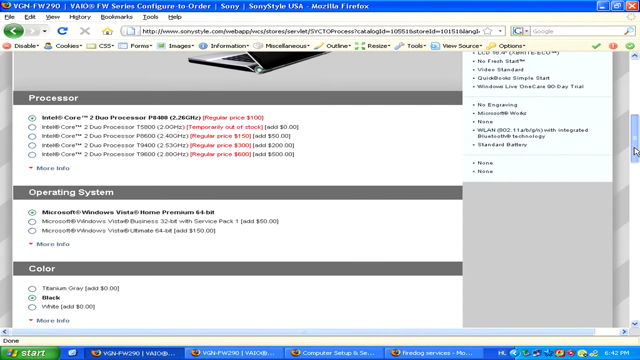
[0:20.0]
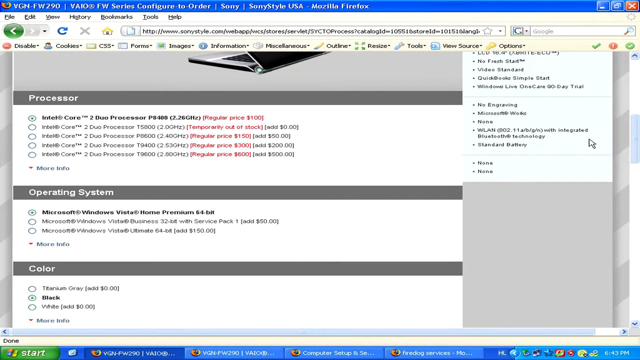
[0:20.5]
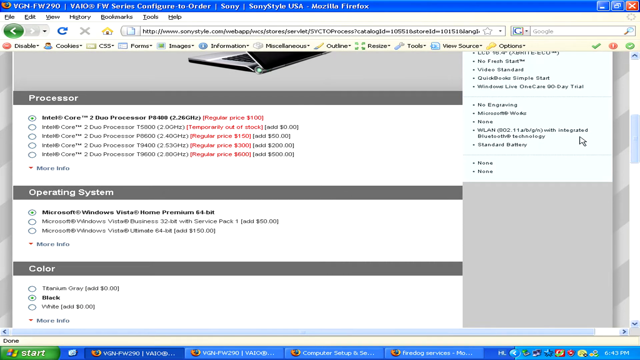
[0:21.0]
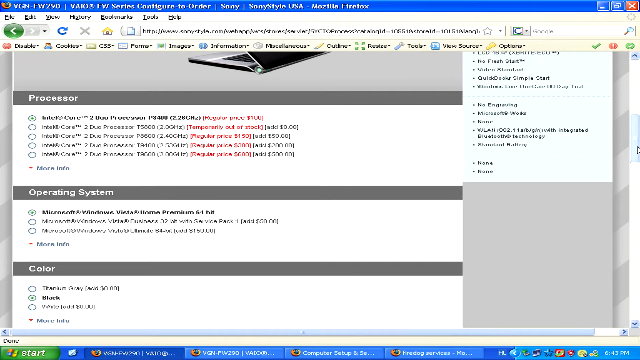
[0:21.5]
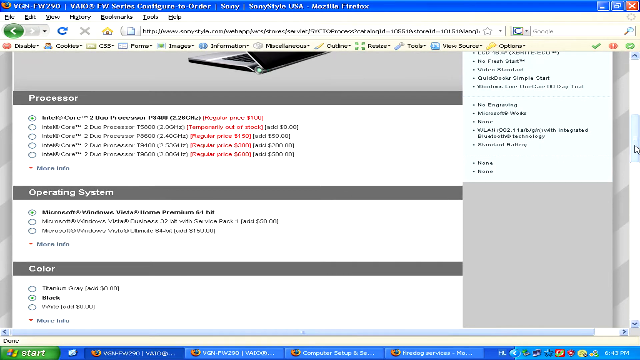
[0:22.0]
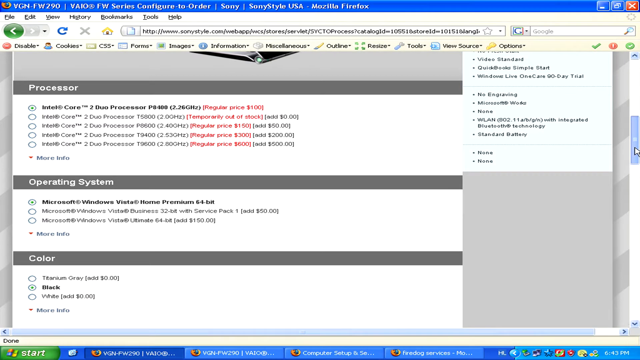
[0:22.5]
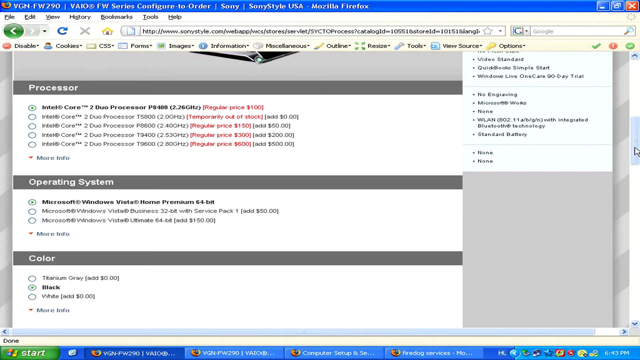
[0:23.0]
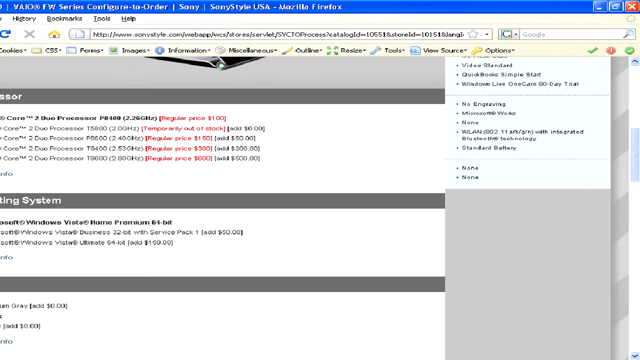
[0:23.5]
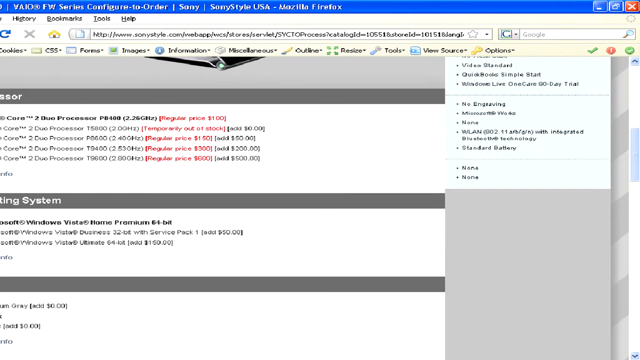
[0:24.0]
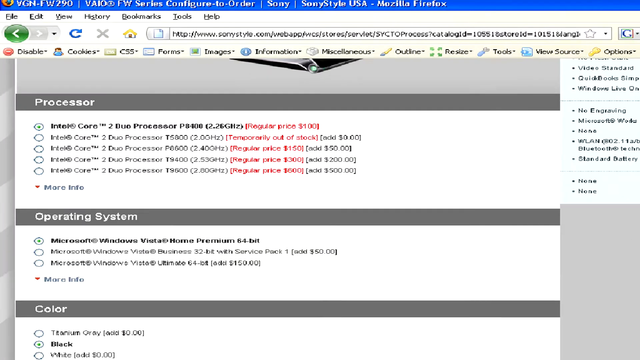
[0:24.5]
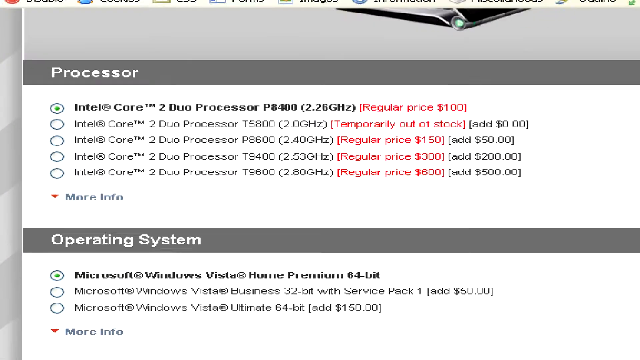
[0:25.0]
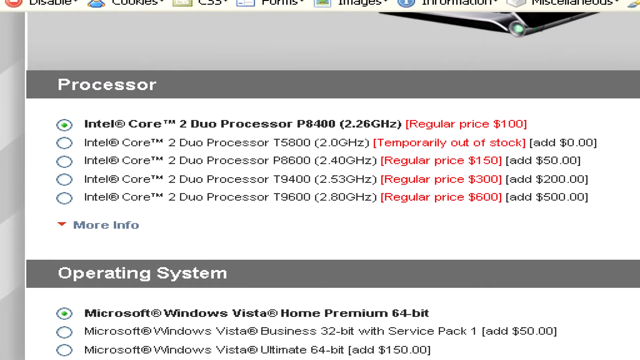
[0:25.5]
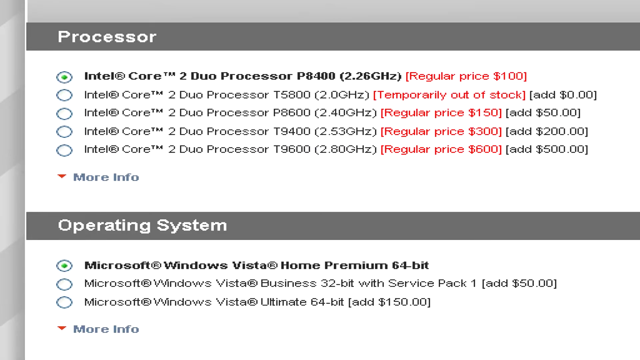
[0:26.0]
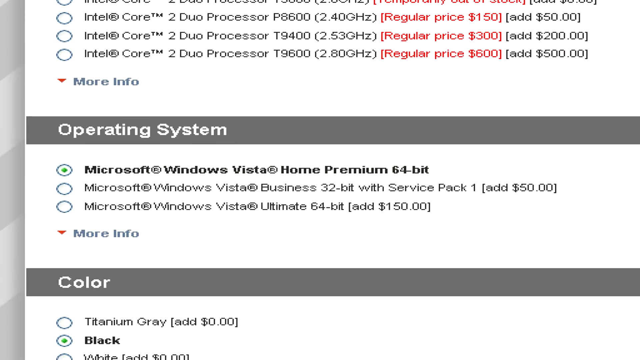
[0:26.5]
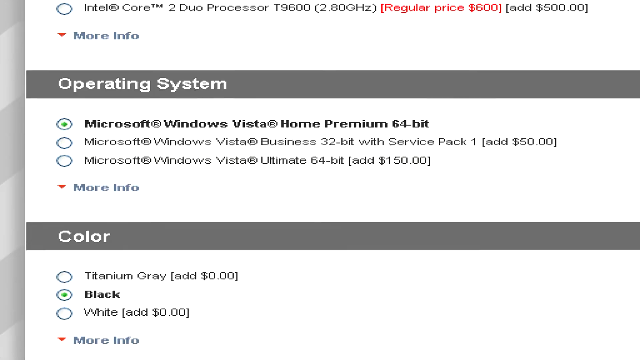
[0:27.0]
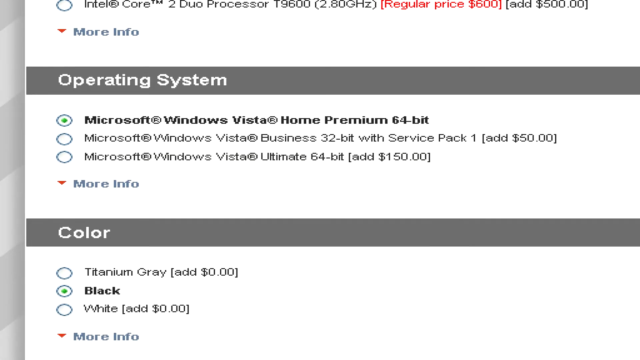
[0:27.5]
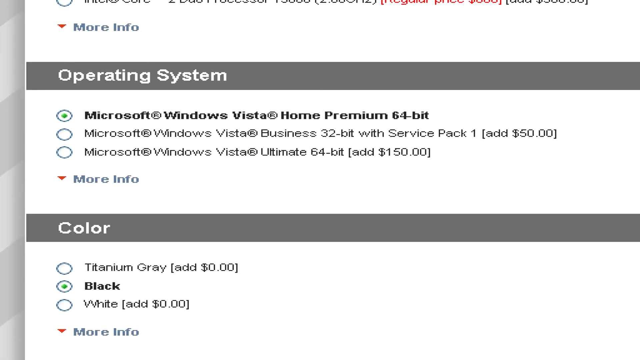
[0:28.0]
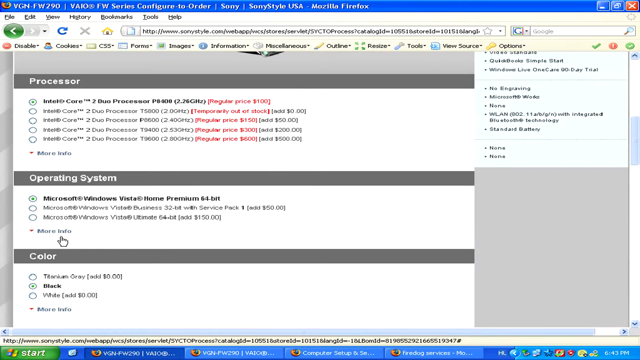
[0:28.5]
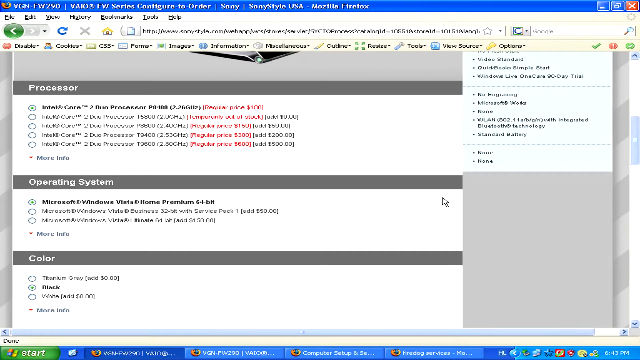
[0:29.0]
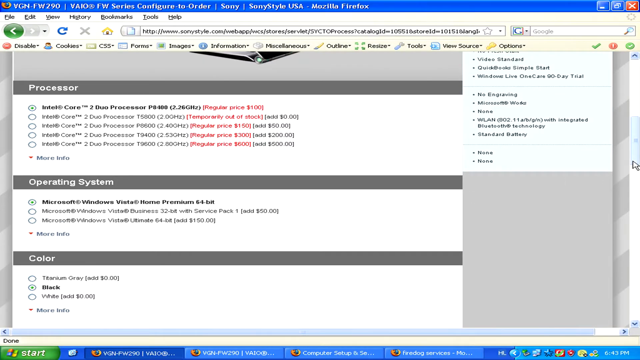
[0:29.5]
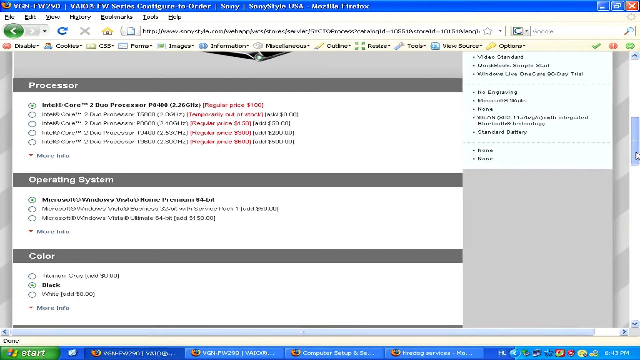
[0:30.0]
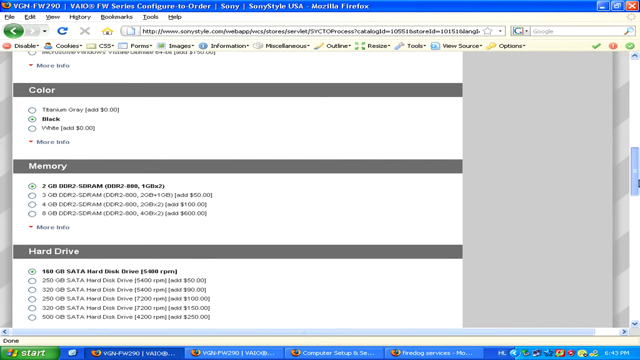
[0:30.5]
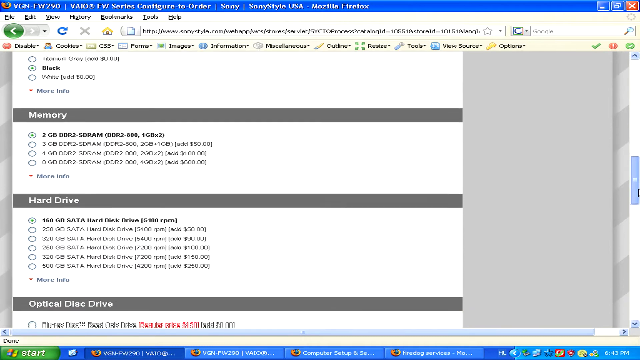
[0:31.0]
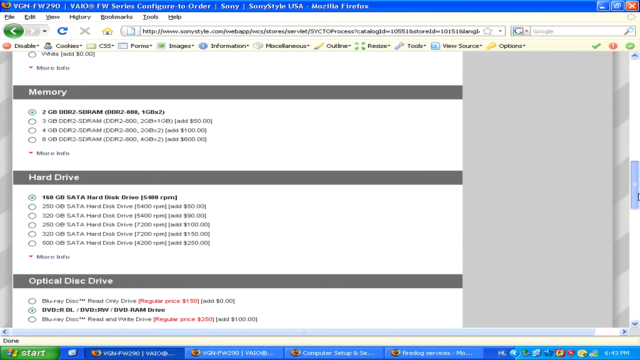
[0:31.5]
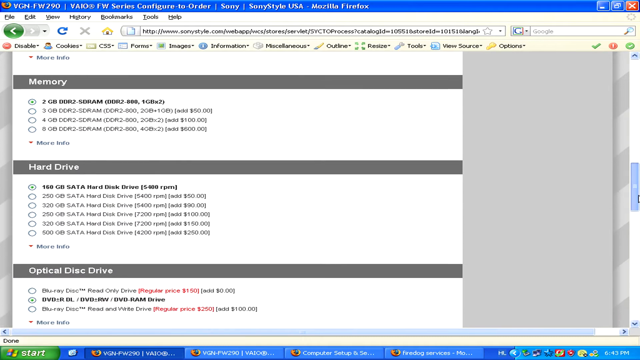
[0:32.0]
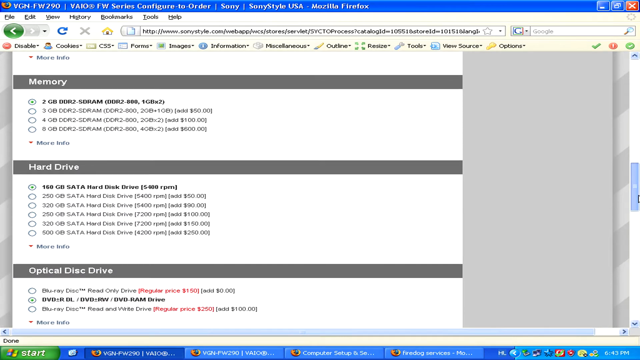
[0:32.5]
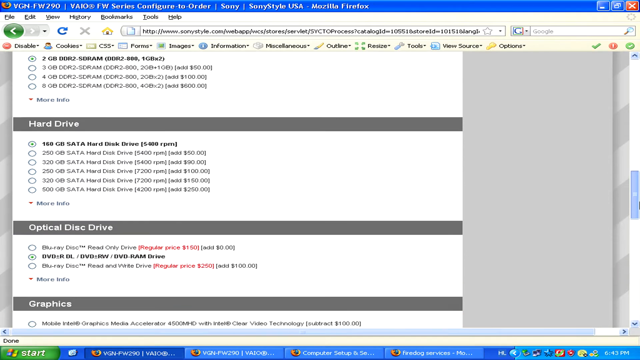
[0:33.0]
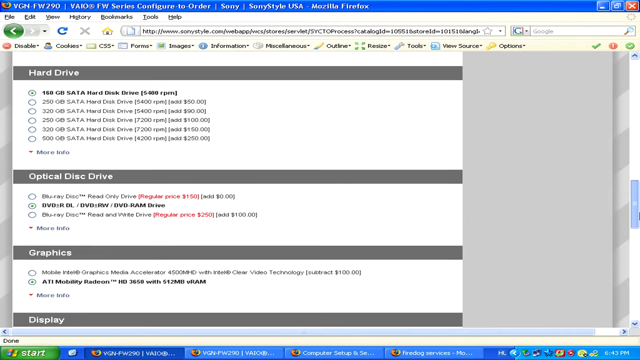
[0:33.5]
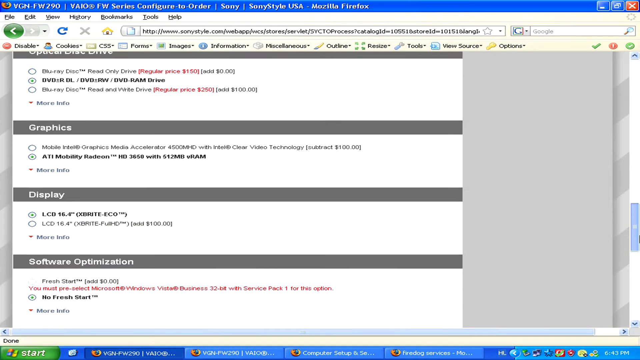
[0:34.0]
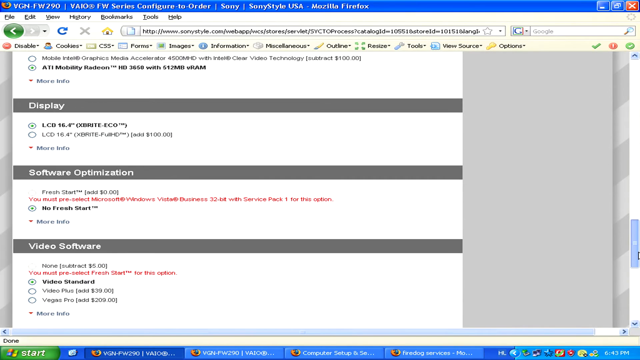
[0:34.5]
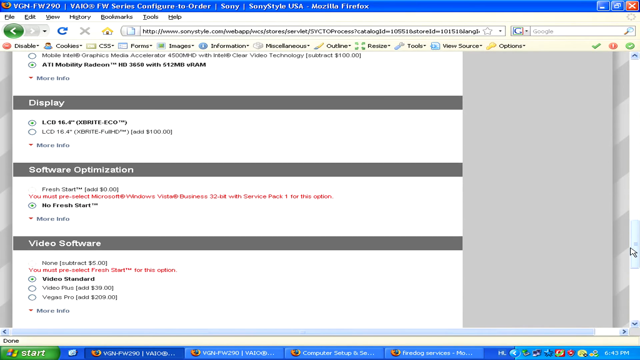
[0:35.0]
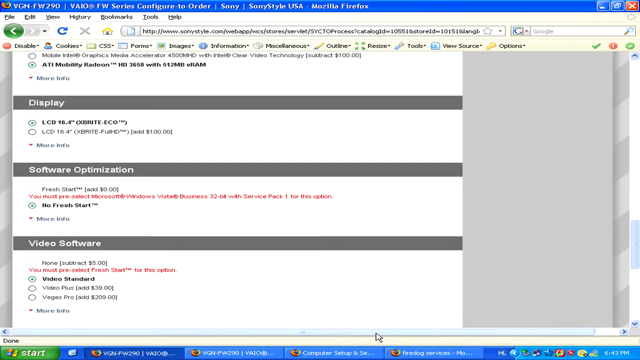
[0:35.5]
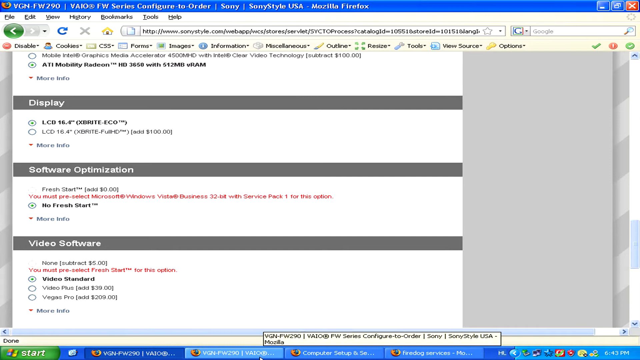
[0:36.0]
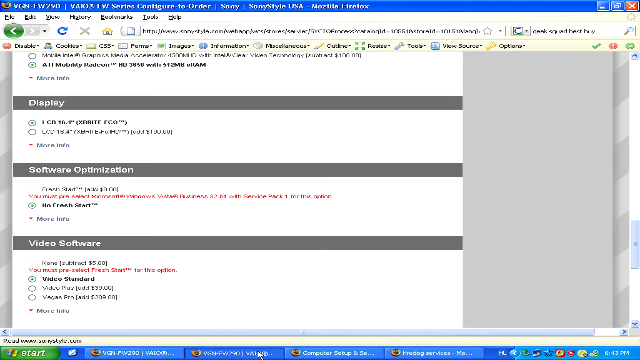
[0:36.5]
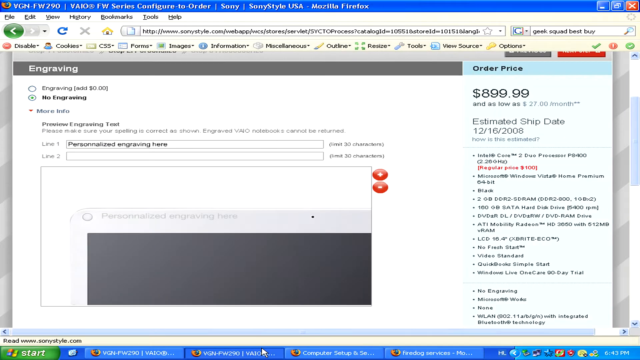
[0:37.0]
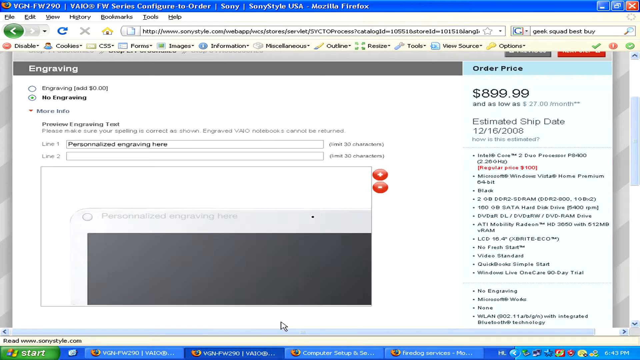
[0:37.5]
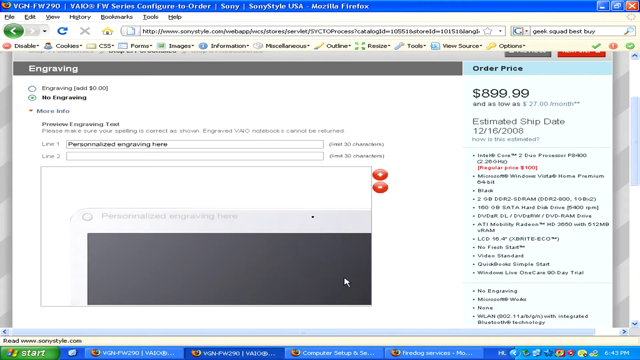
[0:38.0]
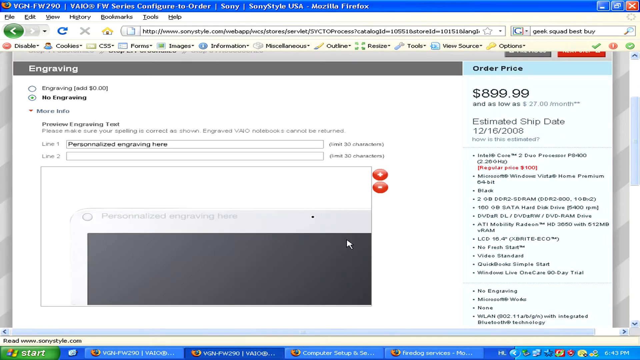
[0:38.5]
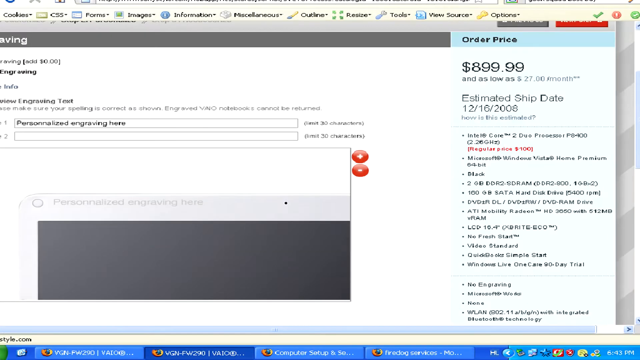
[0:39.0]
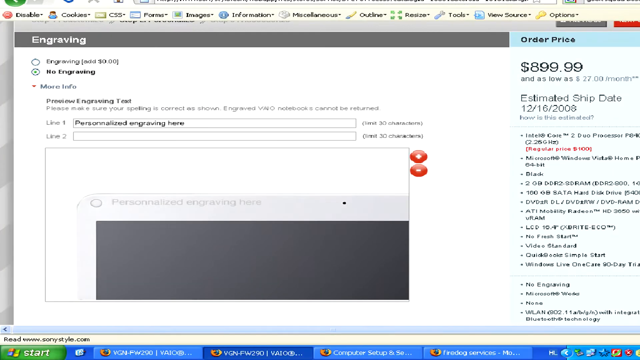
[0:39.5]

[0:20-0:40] A Sony computer page shows options for processor, operating system and color. The selected processor is an Intel Core 2 Duo processor PA400 2.26GHZ, regular price $100; the operating system is Microsoft Windows Vista Home Premium 64-bit; and the color is set to black. The page scrolls slightly, stops, and then slowly zooms into the processor and operating system information. It then scrolls further down to color before returning to full screen. Scrolling continues through sections for memory, hard drive and optical disk drive, as well as graphics, display, software optimization and video software. A section that says "engraving" appears, set to no engraving, with text such as "personalized engraving here" for line 1 and another line 2 engraving option. The view zooms in slightly on that section.